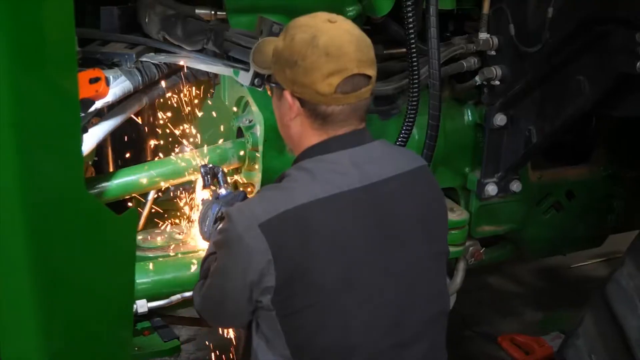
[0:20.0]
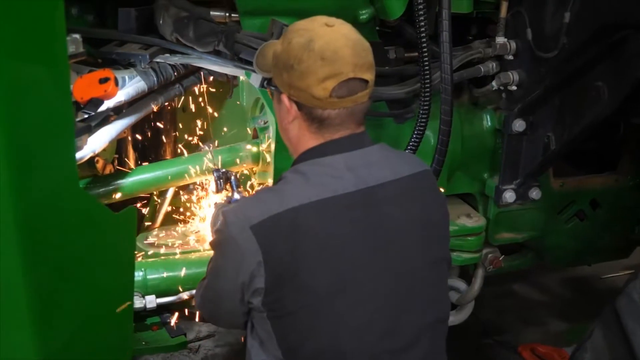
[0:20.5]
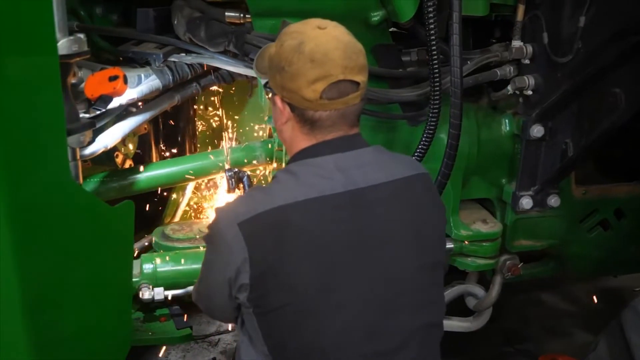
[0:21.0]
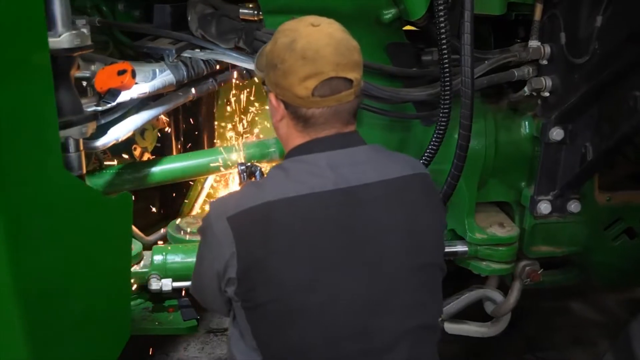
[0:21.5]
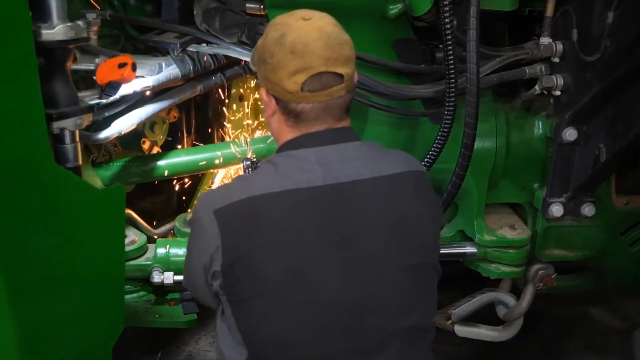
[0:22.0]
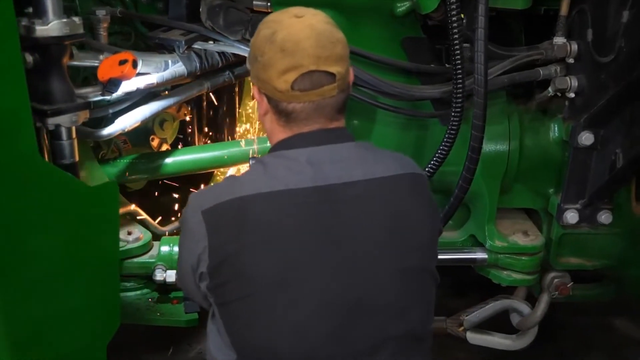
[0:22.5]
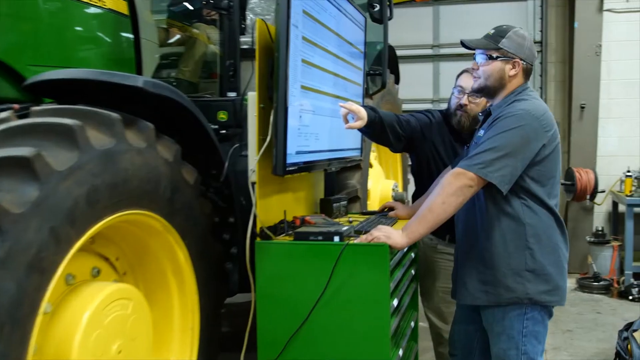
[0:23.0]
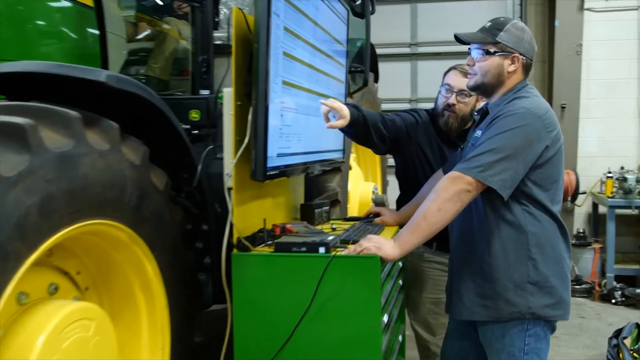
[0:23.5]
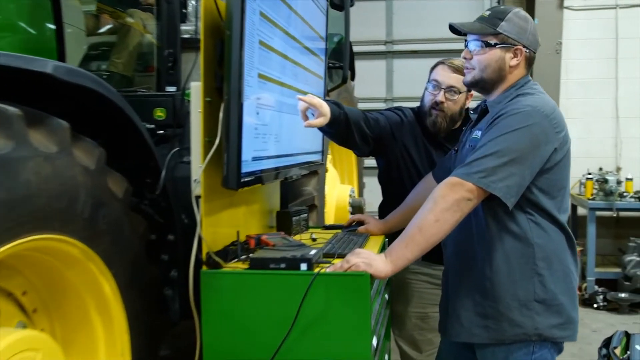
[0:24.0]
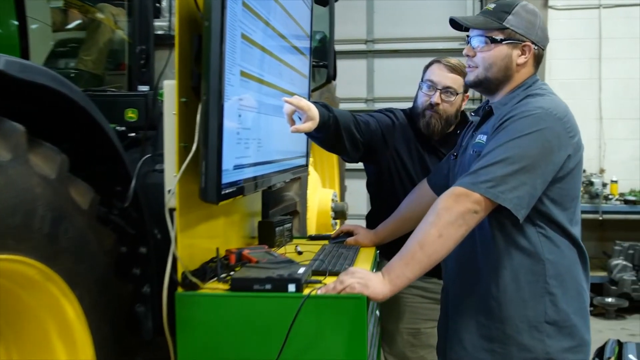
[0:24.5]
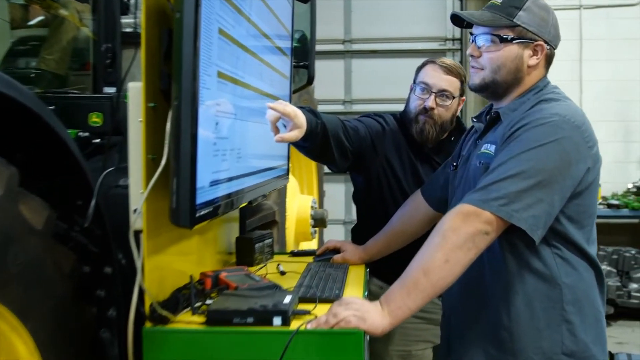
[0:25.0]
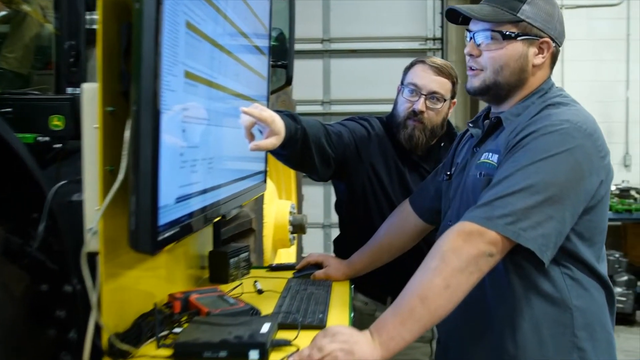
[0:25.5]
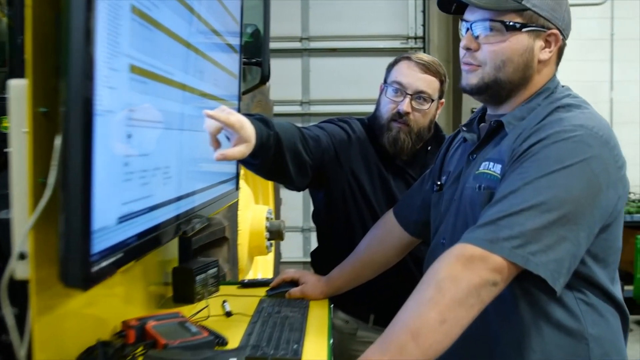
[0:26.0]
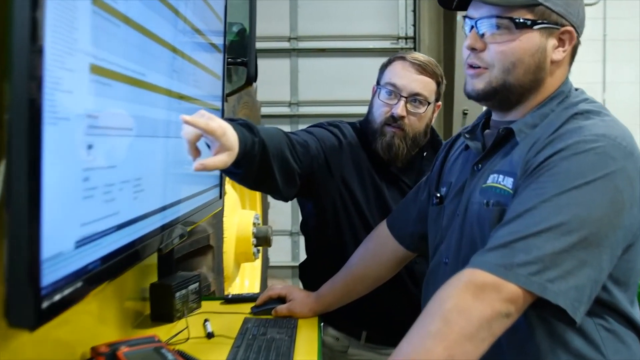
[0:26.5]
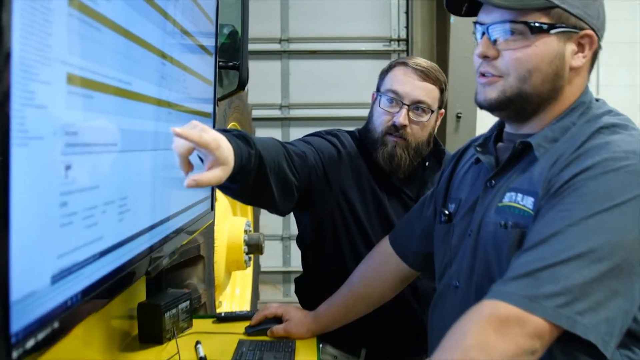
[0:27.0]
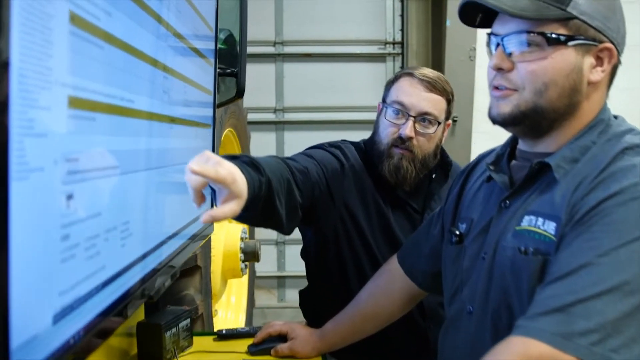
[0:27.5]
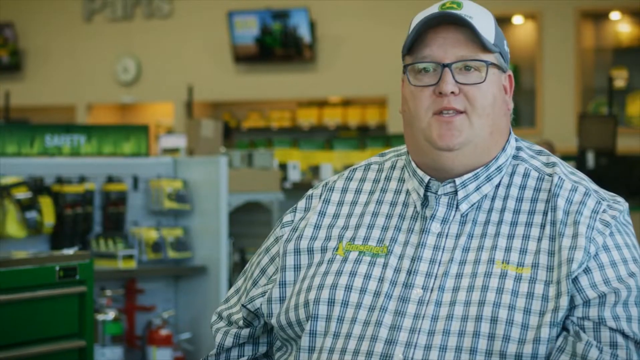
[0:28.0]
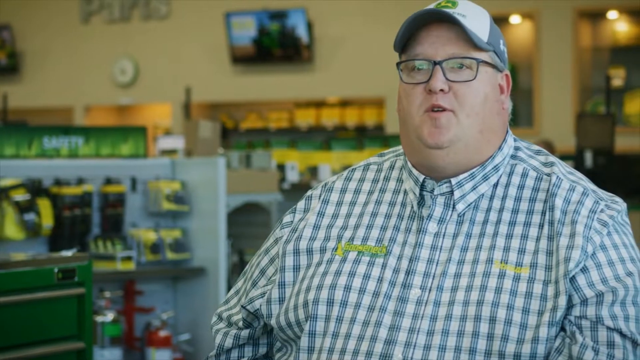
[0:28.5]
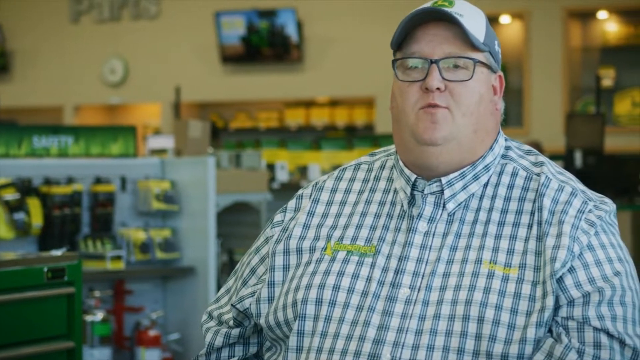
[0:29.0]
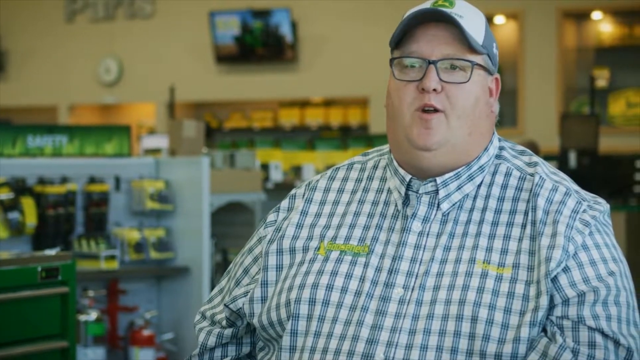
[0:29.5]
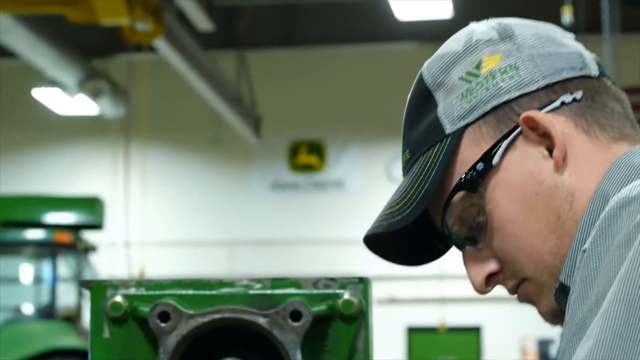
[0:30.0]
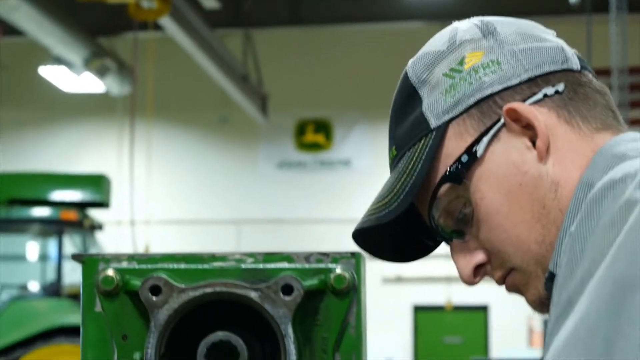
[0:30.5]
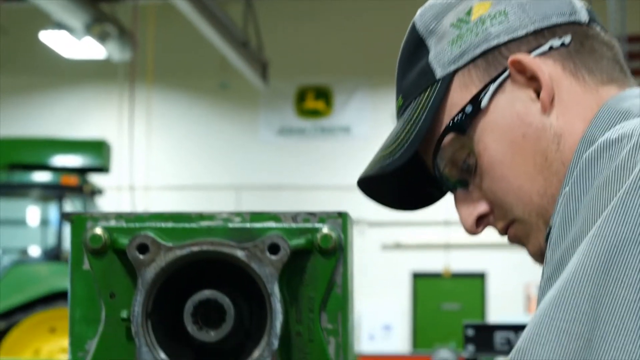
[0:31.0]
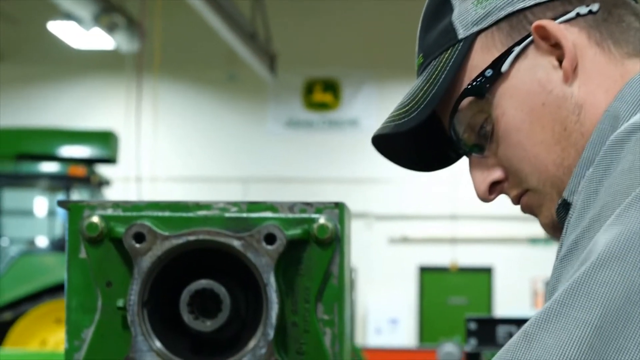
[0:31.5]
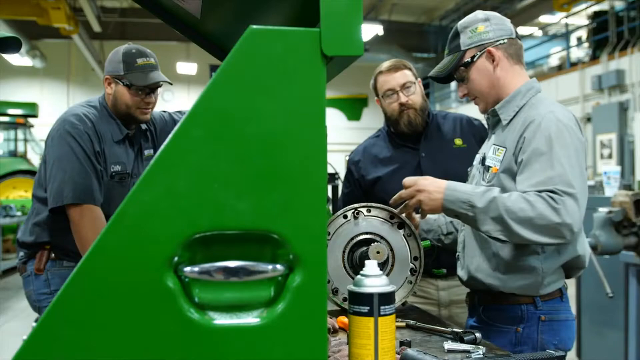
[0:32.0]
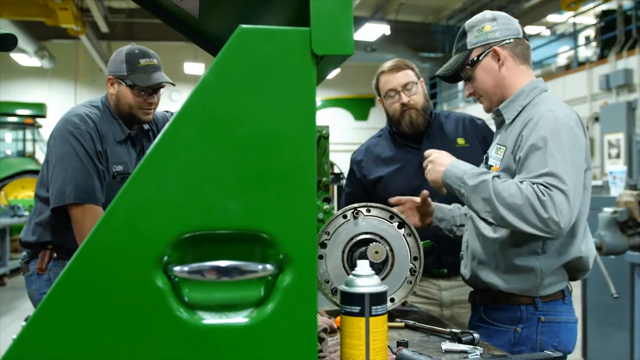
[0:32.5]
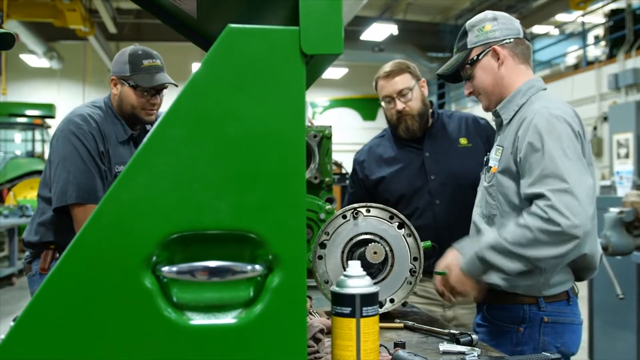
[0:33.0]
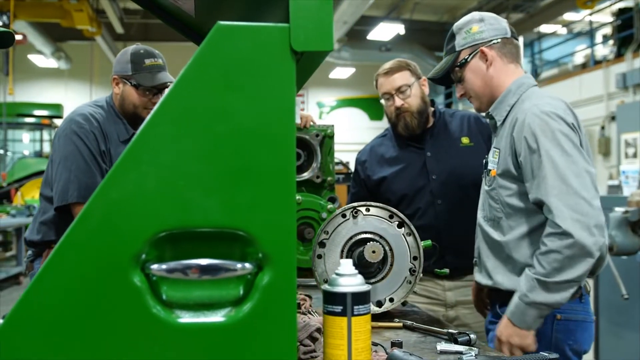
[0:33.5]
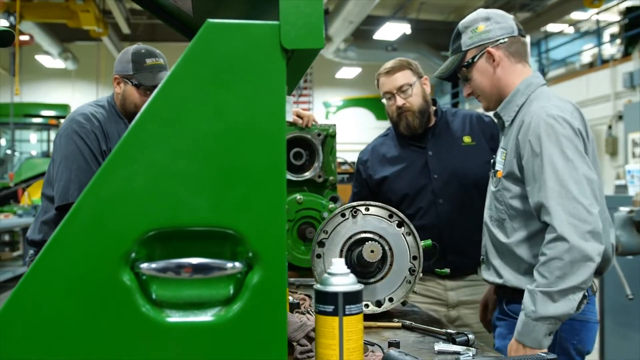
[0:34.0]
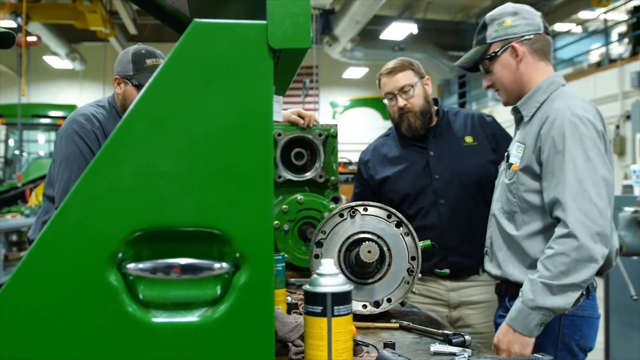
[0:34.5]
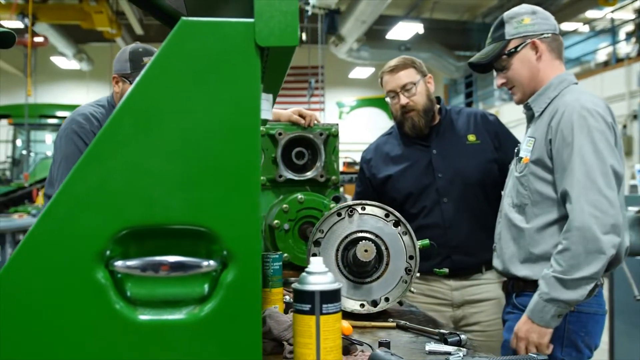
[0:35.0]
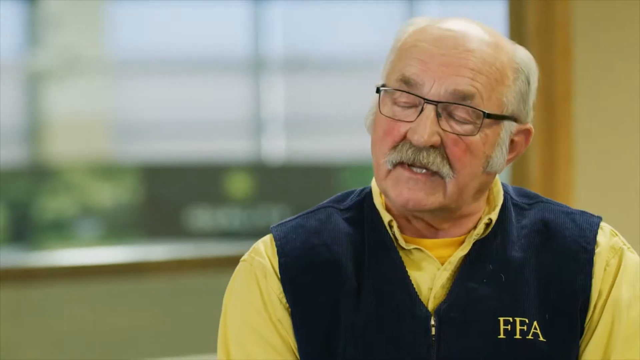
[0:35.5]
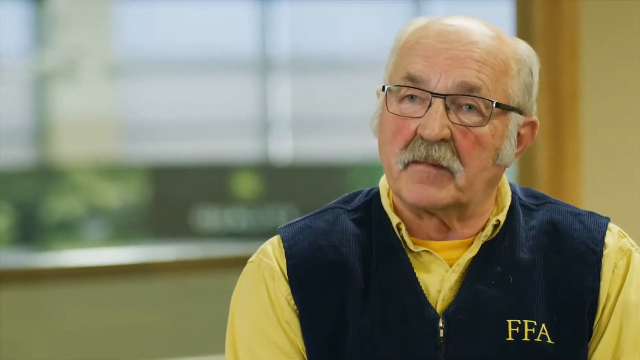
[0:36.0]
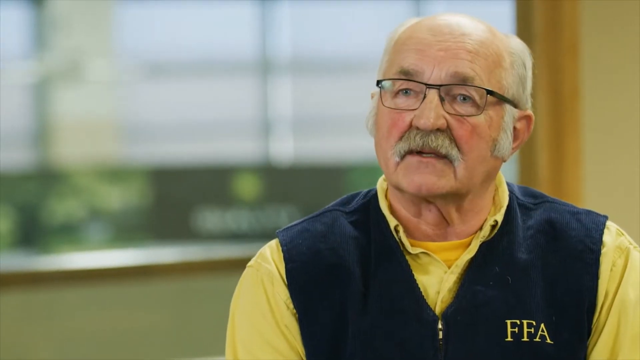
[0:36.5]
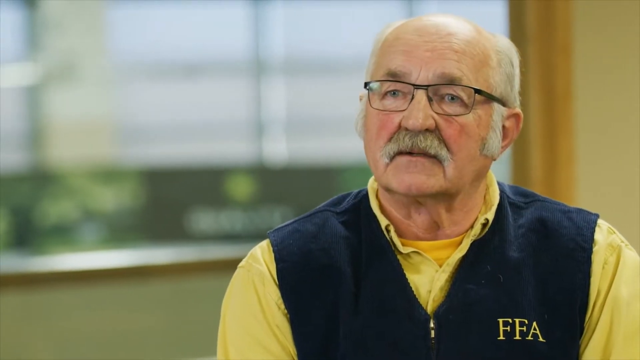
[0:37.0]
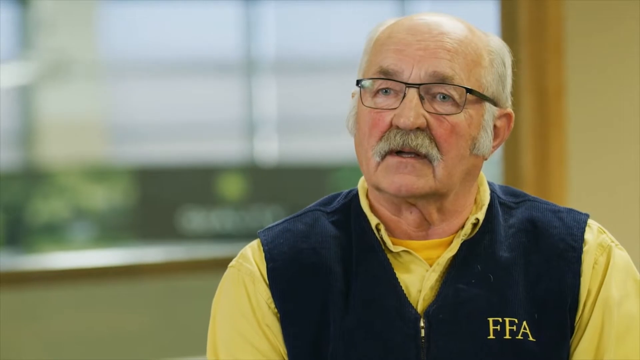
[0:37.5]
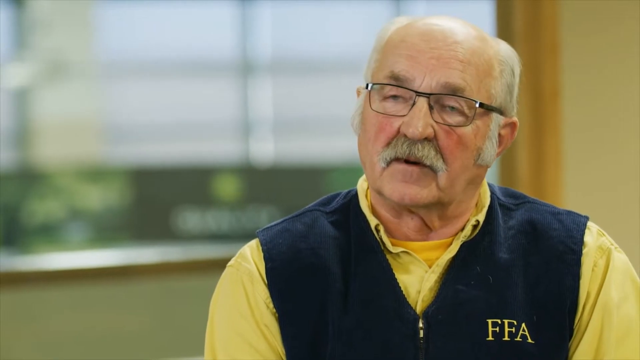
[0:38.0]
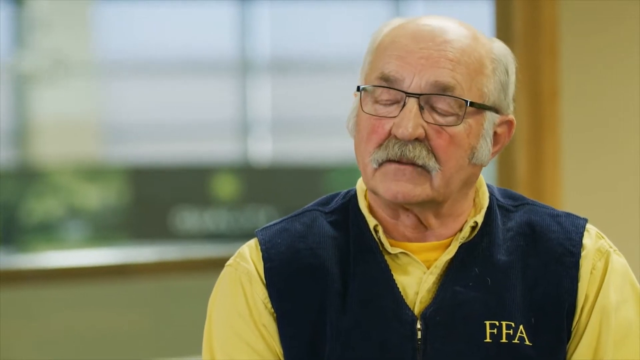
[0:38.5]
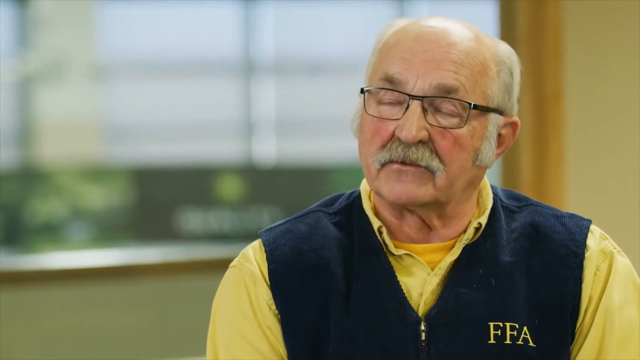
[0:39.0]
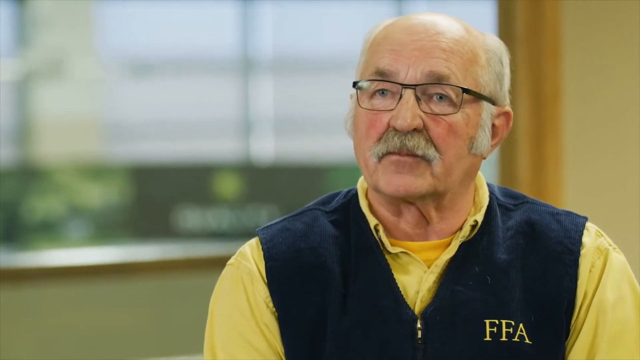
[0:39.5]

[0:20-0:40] A man is seen from behind, from about the mid-back up, wearing a black and gray shirt and a tan-colored hat. He is working on something in what looks like the tractor, or at least another green vehicle, sending off a bunch of bright gold sparks. Next, a man stands at a computer in front of the tractor, operating the mouse while a man behind him points at something on the screen; the camera zooms in until it is close on their faces. The man in the John Deere hat speaks to the camera; although the background is blurred, on the left side there are a bunch of displays of green and yellow things behind him. Someone then works inside a shop, with green vehicles and equipment to his left, looking down at something in front of him. The video zooms out to reveal a kind of metallic wheel in front of him that he is looking at. Behind him another man is also looking at what he is doing, and on the other side of the machine on the left another man is also watching. The video then switches to another man shown from the chest up, with white hair and glasses, wearing a navy-colored vest and a yellow shirt. The background behind him is again quite blurred. He speaks for a little while, occasionally moving his head for emphasis.